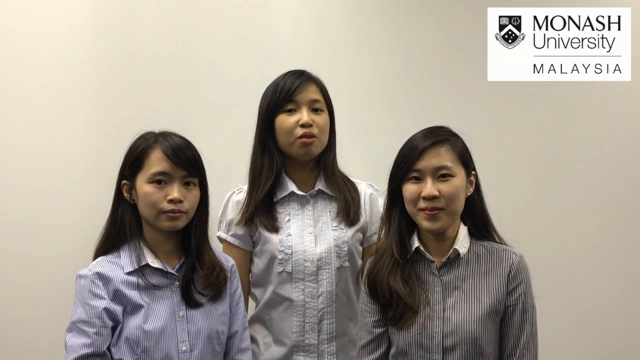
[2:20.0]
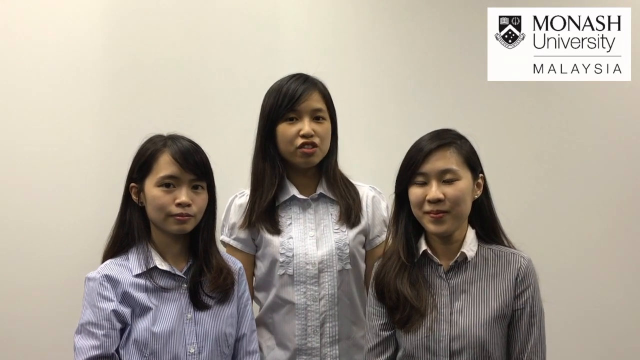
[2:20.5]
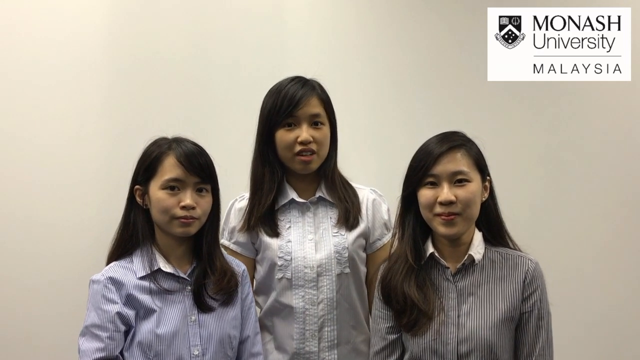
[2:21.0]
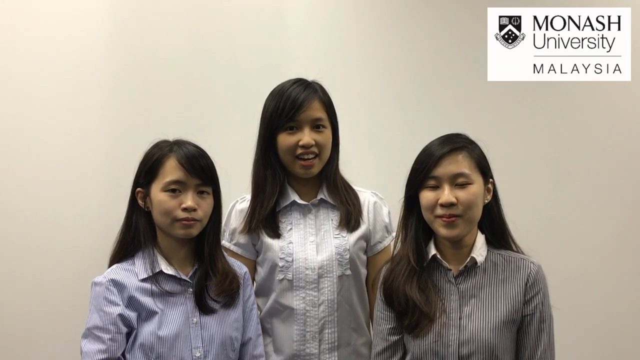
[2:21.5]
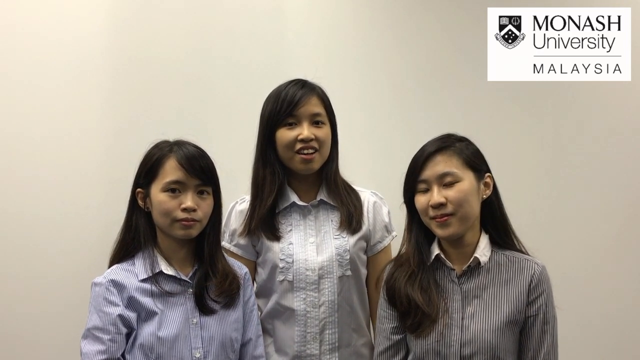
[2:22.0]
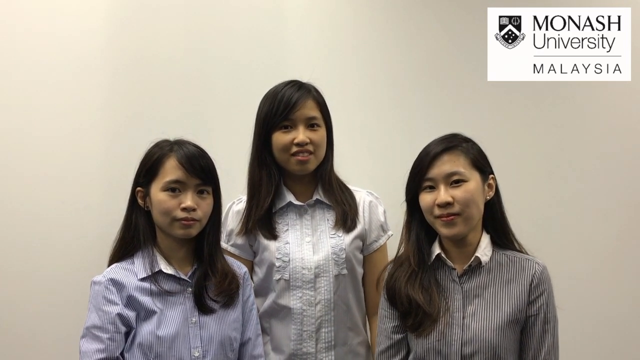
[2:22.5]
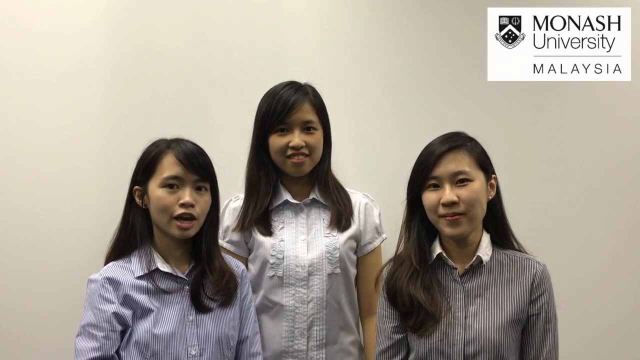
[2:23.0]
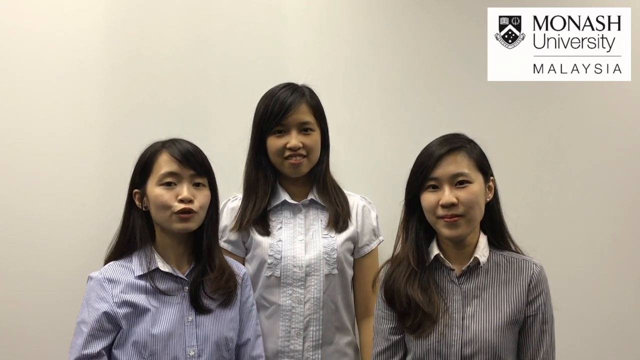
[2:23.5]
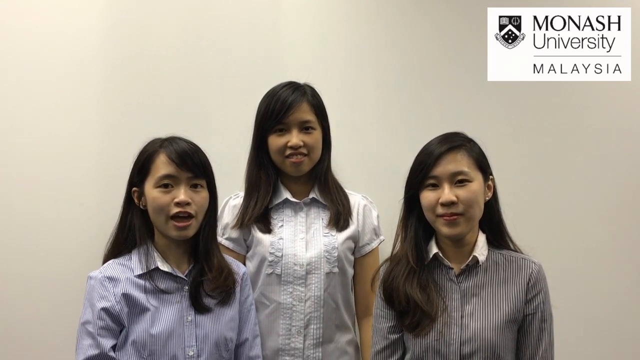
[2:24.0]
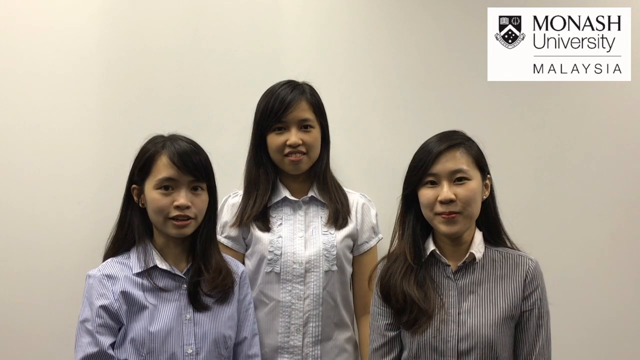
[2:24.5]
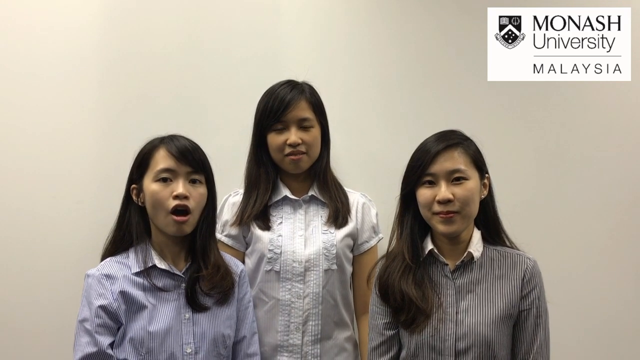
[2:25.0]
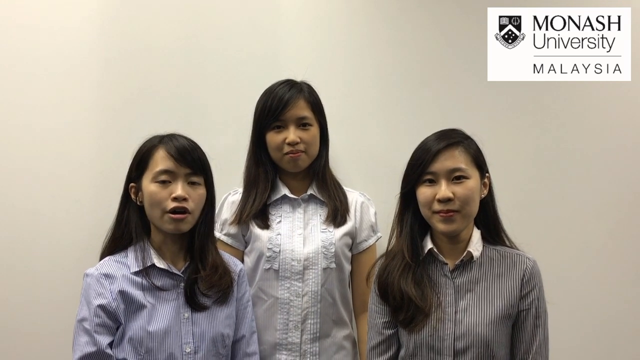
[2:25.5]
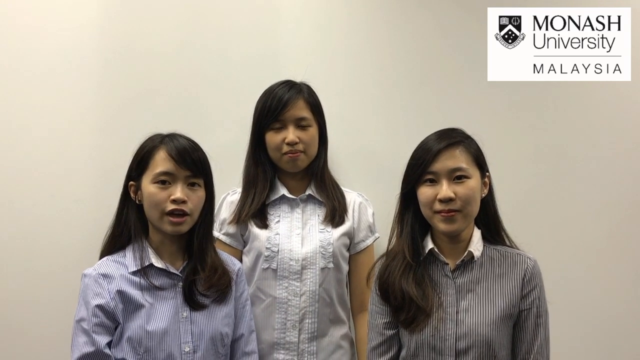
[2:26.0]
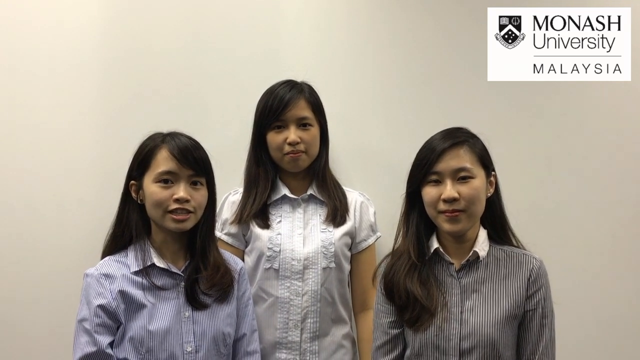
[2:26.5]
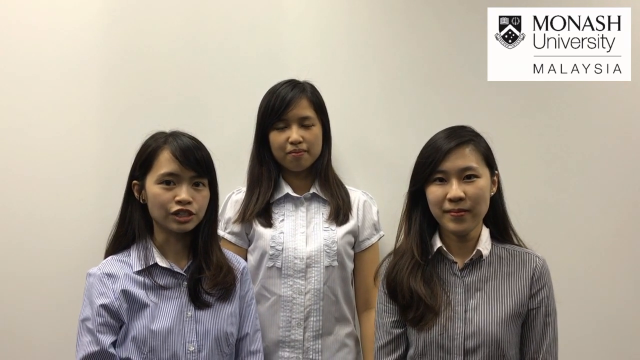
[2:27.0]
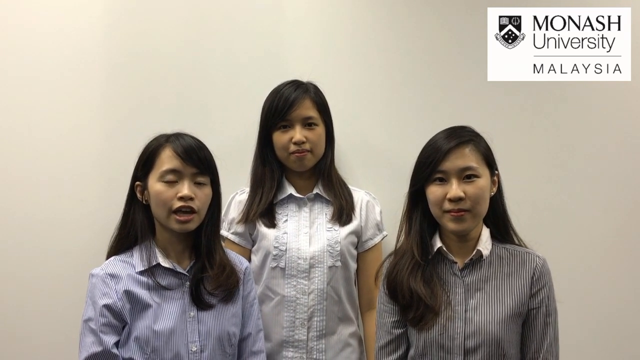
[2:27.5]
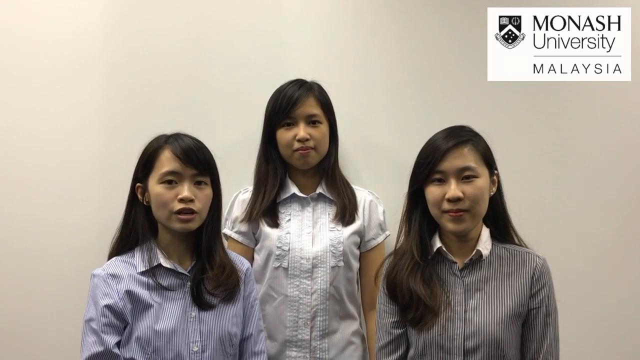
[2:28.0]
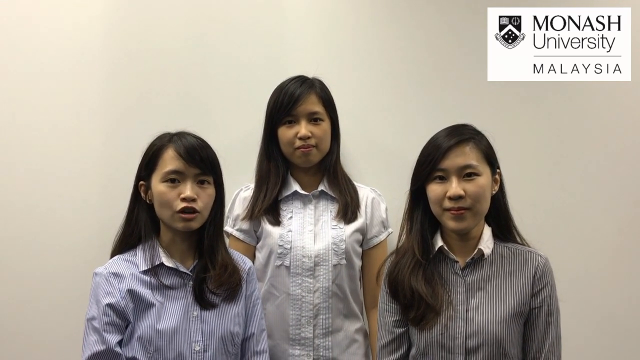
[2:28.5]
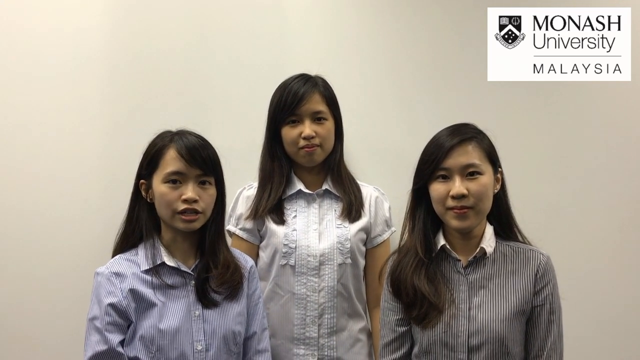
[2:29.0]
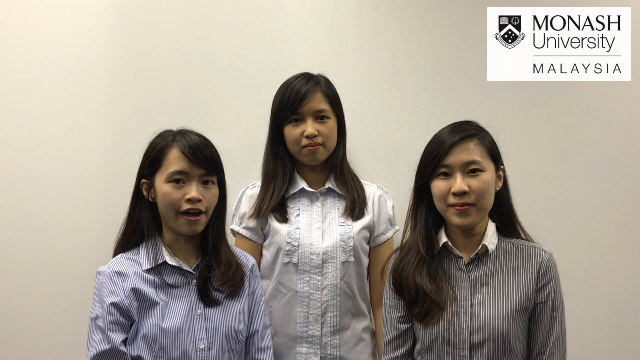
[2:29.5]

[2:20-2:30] Three young Asian women are in front, with a white rectangle in the upper right corner reading "Monash University, Malaysia." Each has long dark hair; the first wears a blue button-up shirt, the middle one a white short-sleeve shirt, and the third a gray shirt. They all look very happy as they speak. The middle woman speaks first, then the one on the left, who looks a little younger than the other two, and then the woman on the right speaks to the viewer.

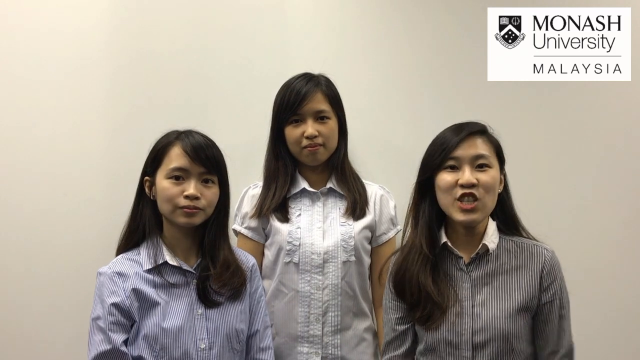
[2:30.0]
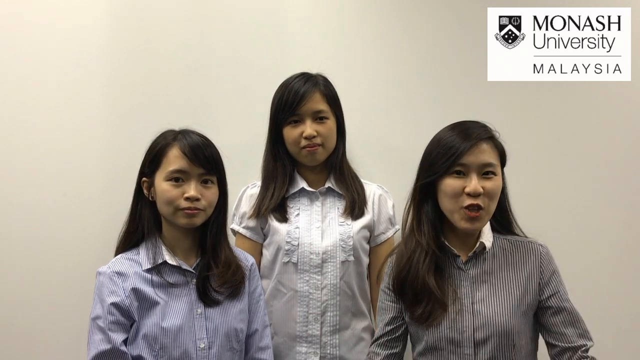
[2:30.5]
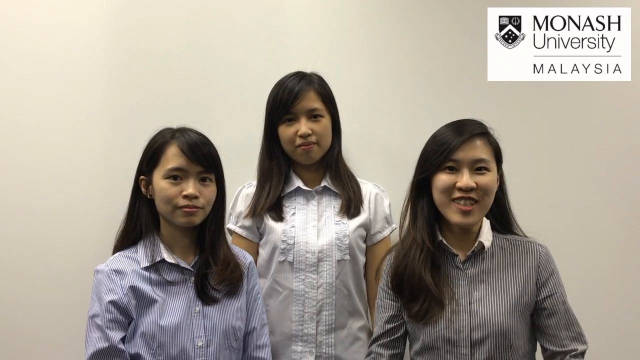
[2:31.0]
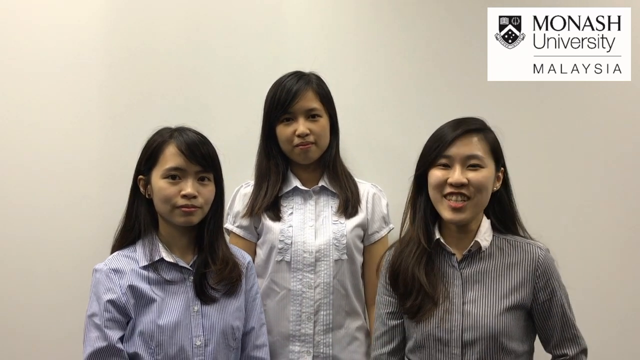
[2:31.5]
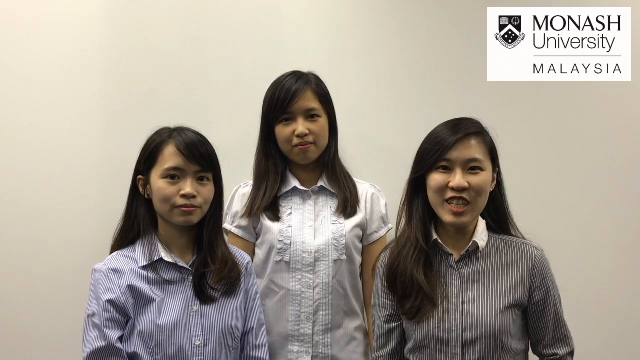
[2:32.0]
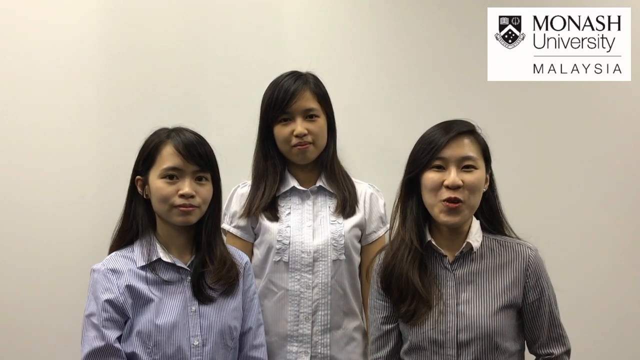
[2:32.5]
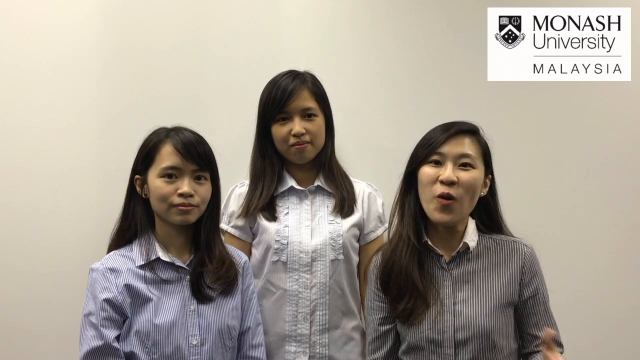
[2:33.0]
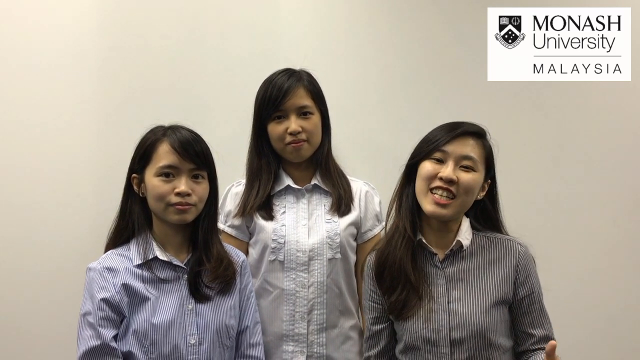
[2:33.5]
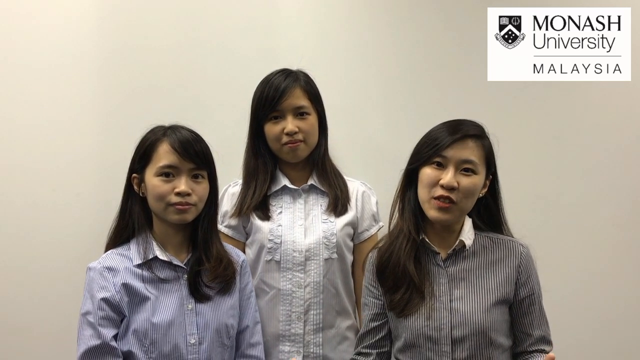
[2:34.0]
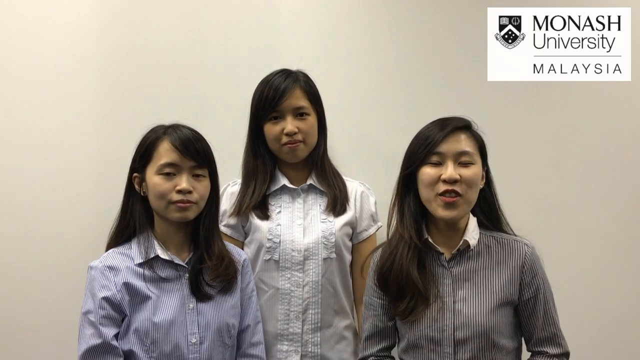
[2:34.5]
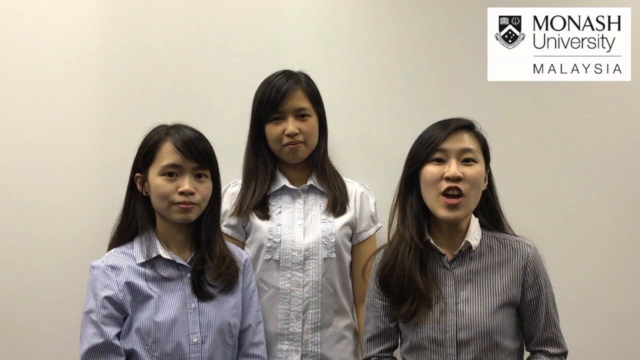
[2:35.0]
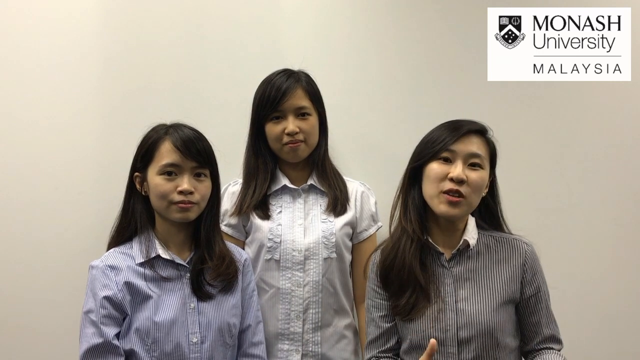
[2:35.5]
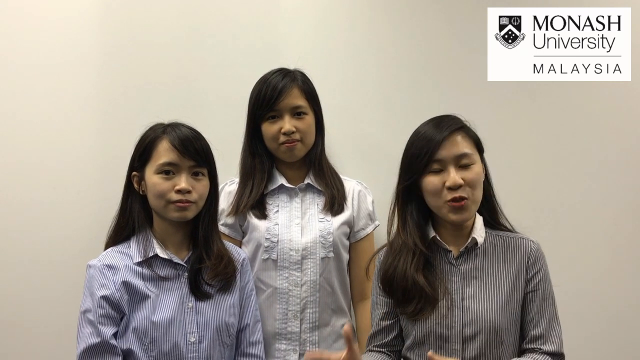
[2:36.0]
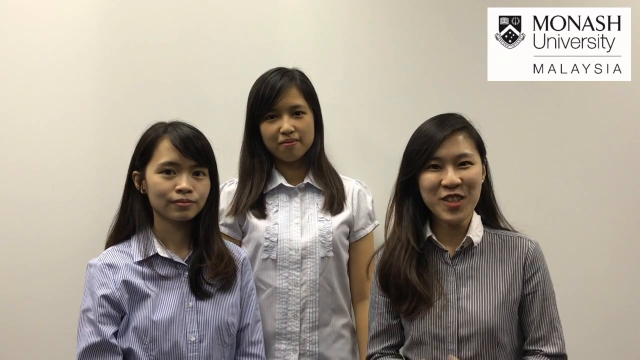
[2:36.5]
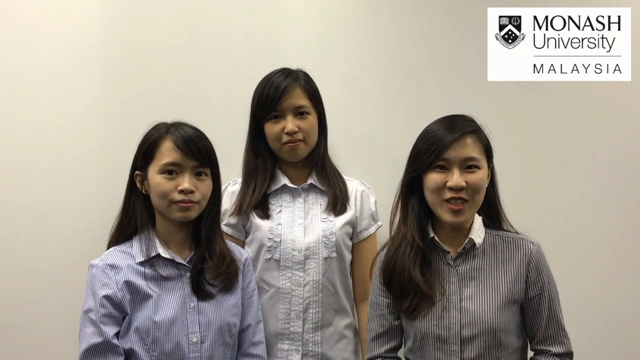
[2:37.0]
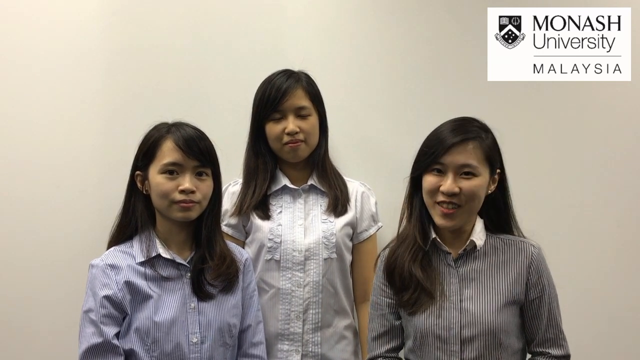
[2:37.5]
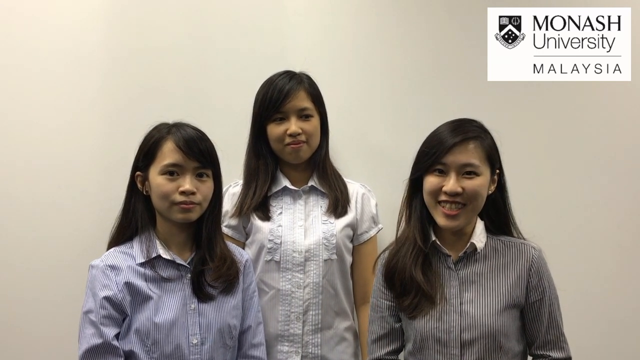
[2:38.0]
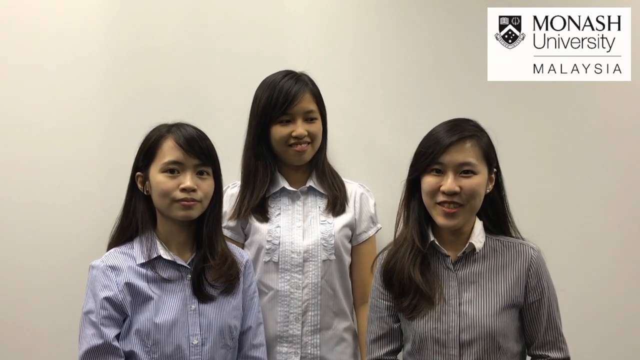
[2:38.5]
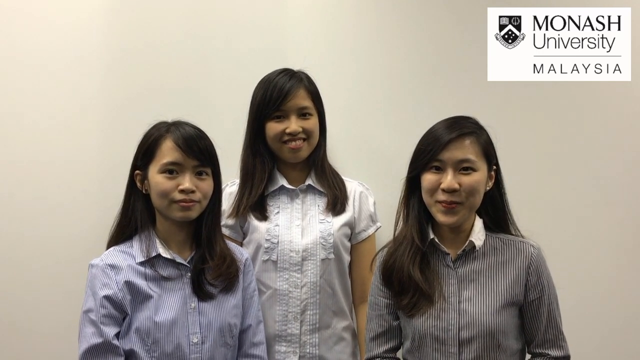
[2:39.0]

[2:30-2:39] Against a gray gradient background, a small box in the upper right corner reads "Monash University, Malaysia." Three Asian women are shown. The one on the left looks very young, has long dark hair and wears a blue button-up shirt. The young woman in the middle also has long dark hair and wears a white shirt that buttons up. The woman on the right has long dark hair, a pretty smile, and wears a gray sweater. The woman in the middle speaks, then the woman on the left, and then the woman on the right.